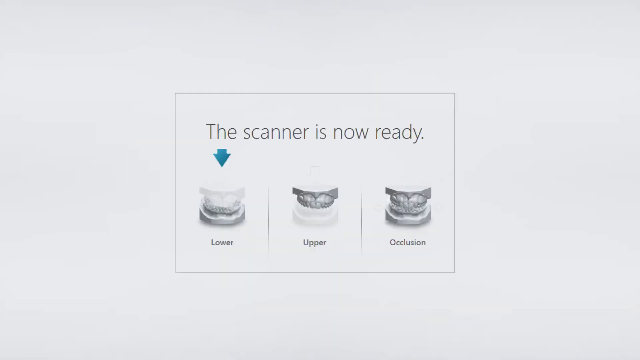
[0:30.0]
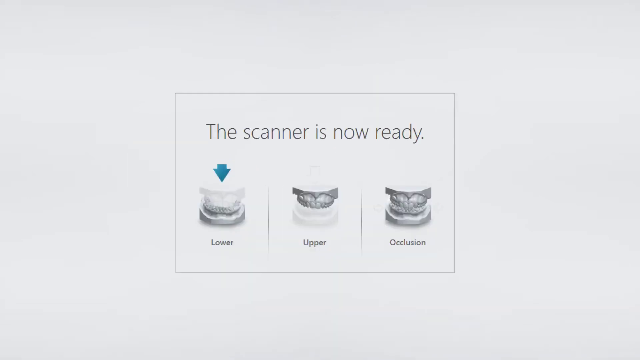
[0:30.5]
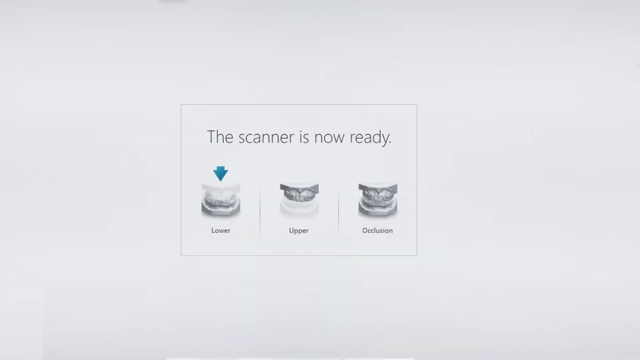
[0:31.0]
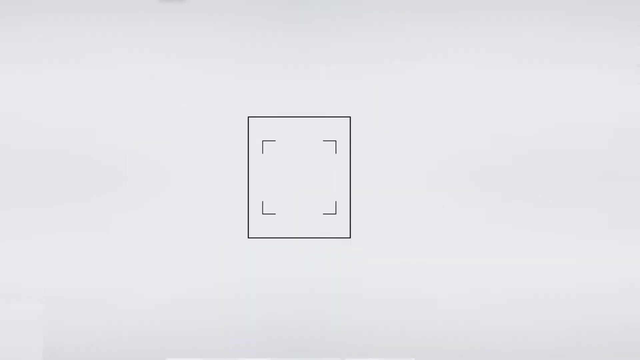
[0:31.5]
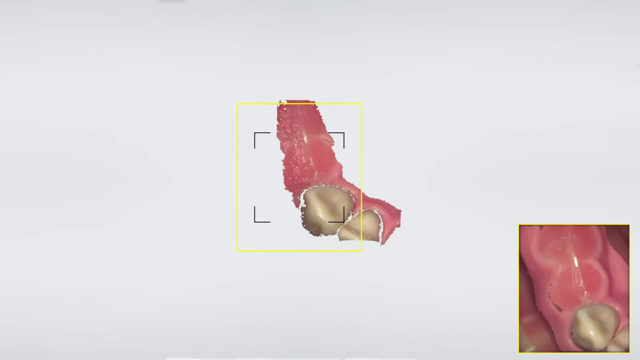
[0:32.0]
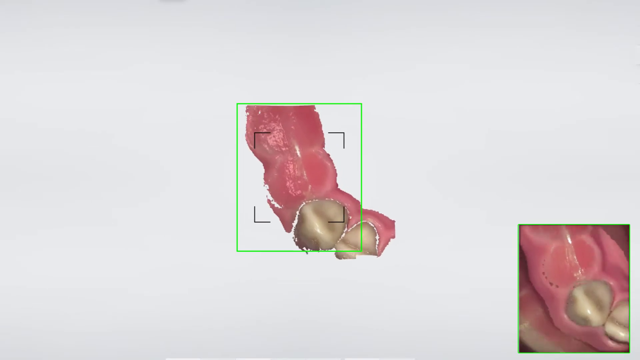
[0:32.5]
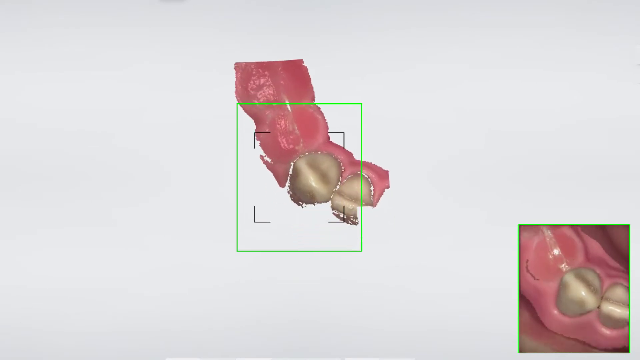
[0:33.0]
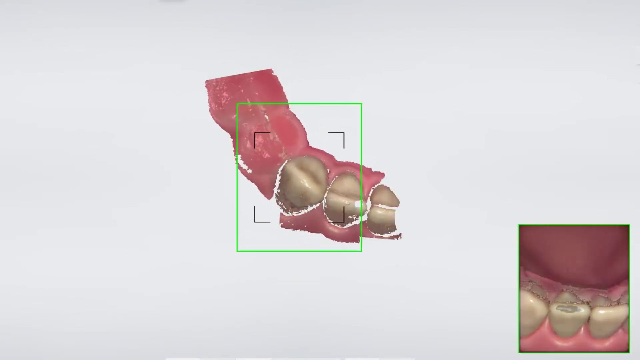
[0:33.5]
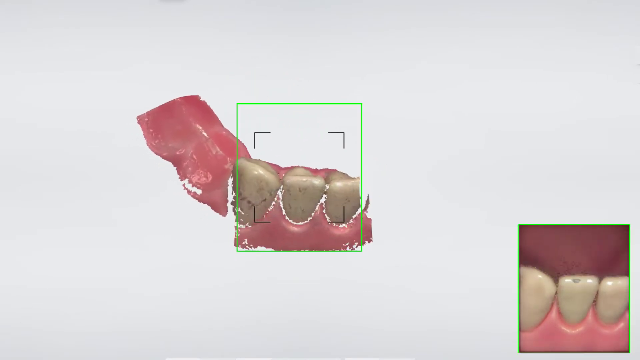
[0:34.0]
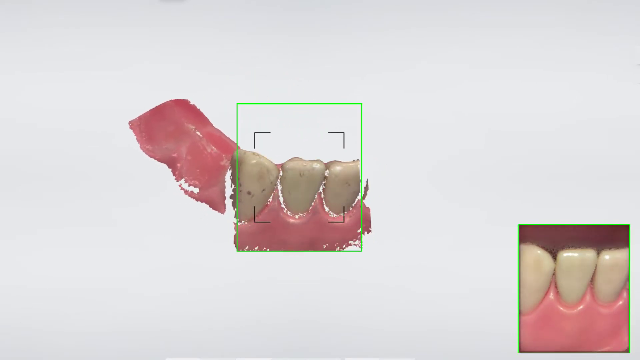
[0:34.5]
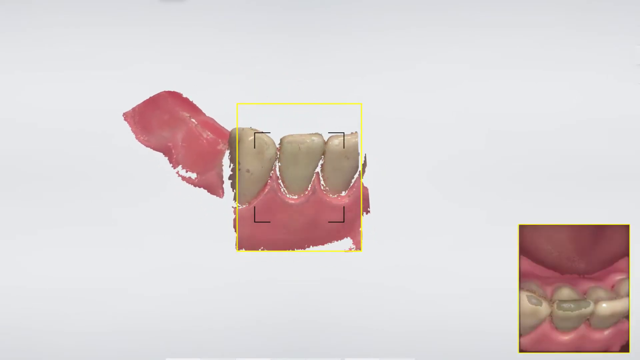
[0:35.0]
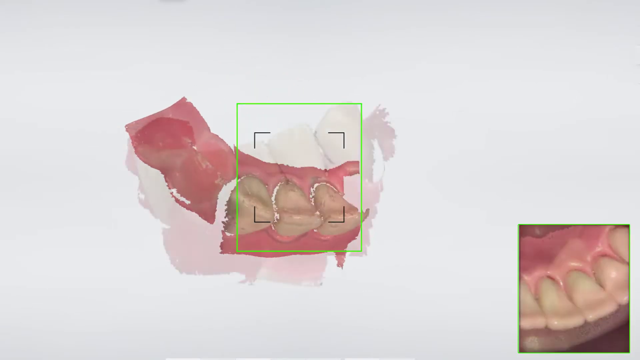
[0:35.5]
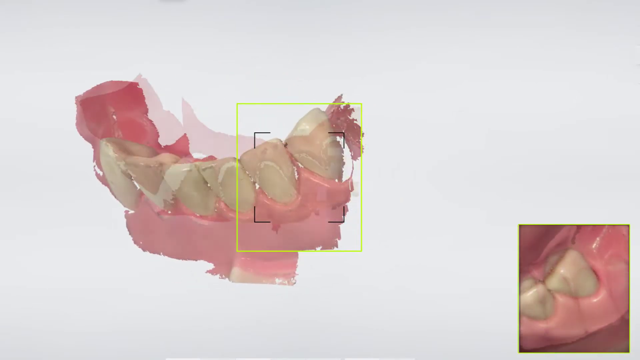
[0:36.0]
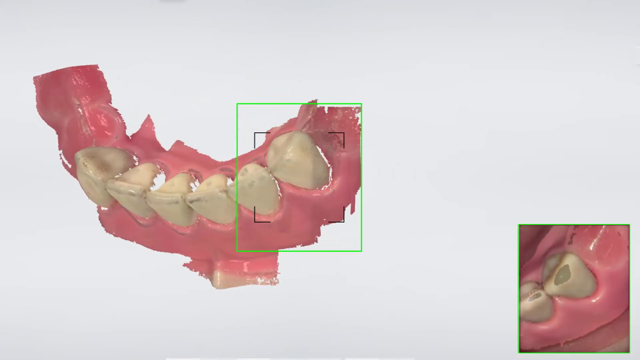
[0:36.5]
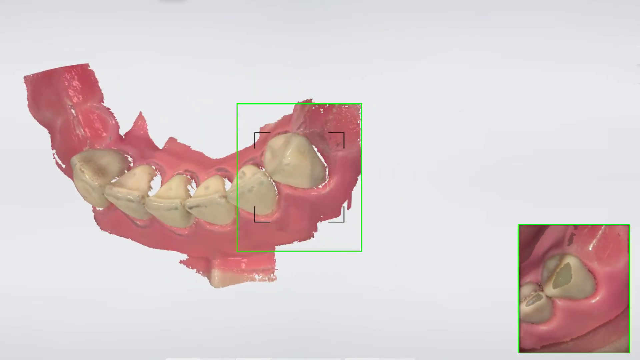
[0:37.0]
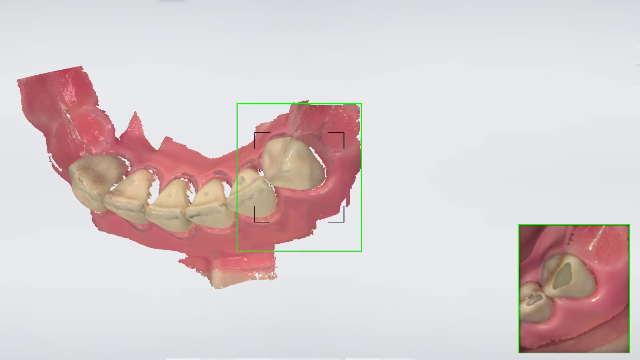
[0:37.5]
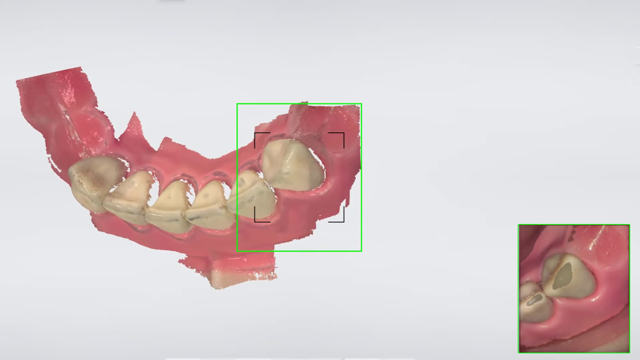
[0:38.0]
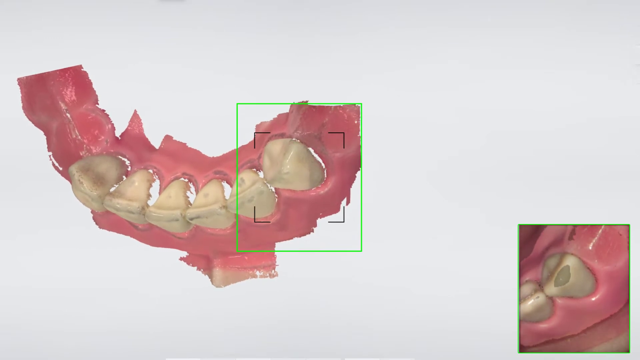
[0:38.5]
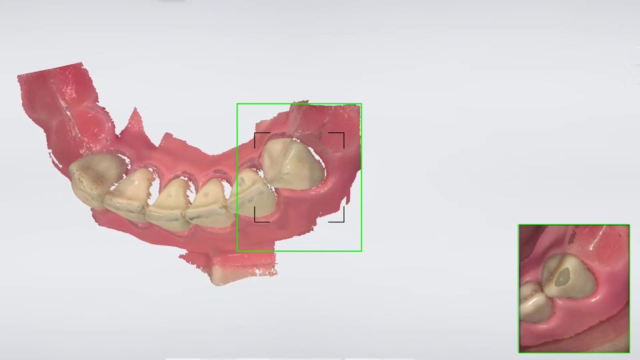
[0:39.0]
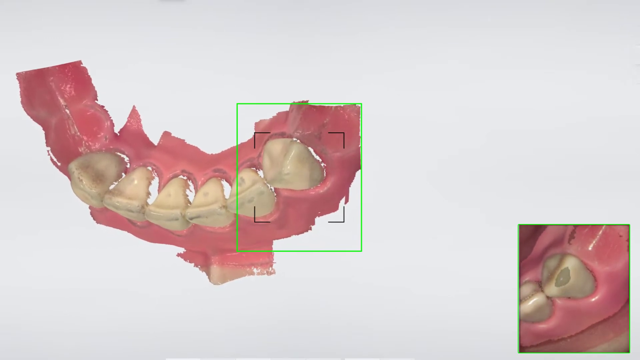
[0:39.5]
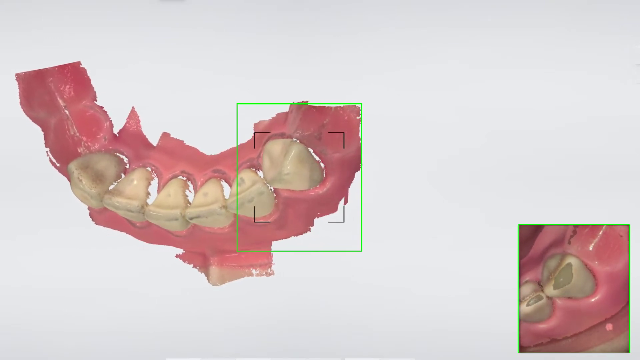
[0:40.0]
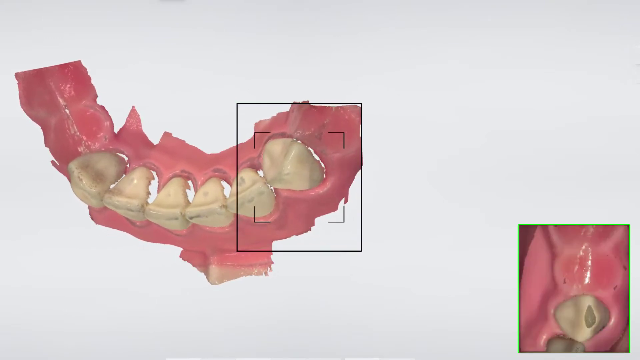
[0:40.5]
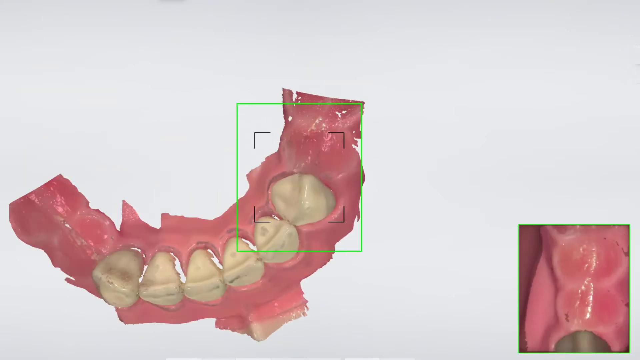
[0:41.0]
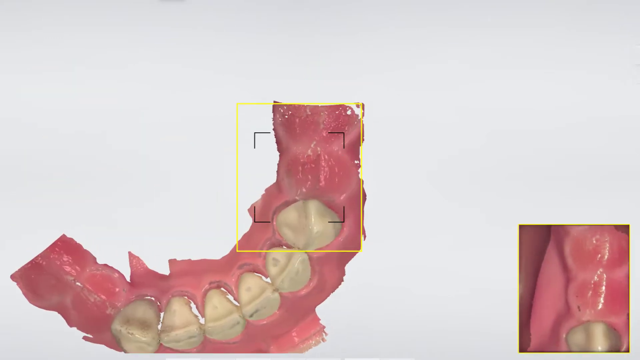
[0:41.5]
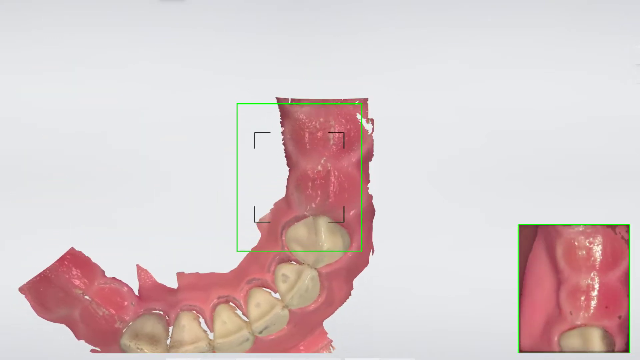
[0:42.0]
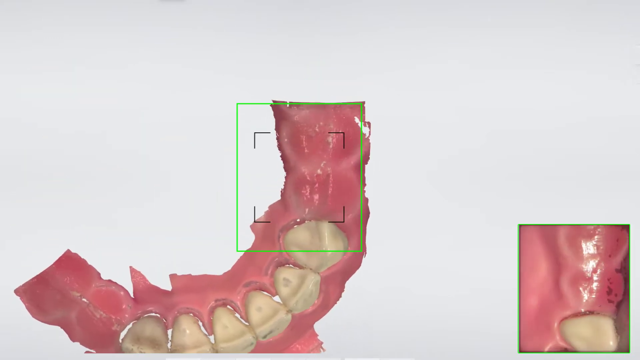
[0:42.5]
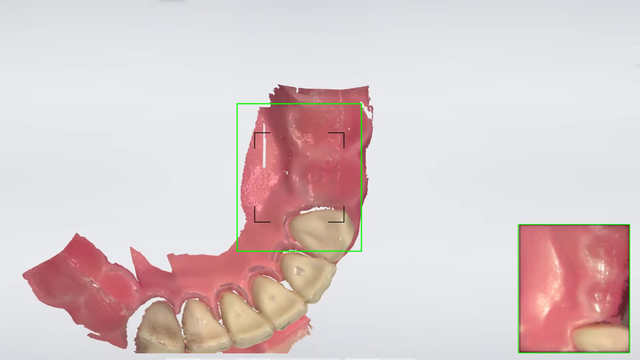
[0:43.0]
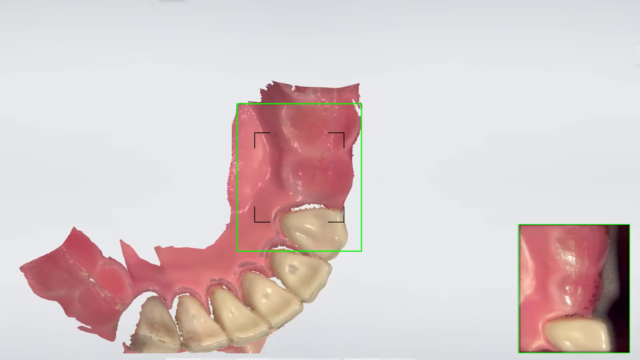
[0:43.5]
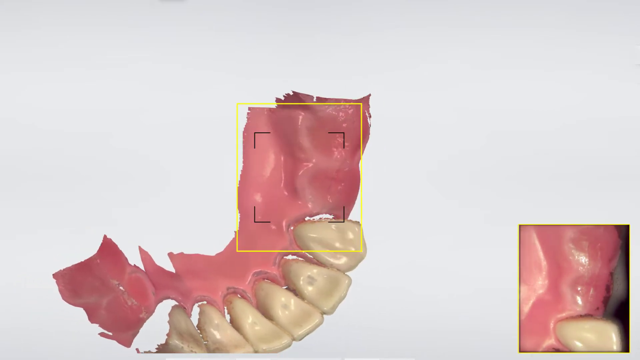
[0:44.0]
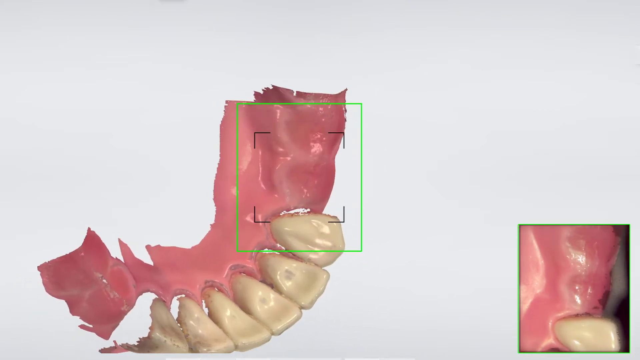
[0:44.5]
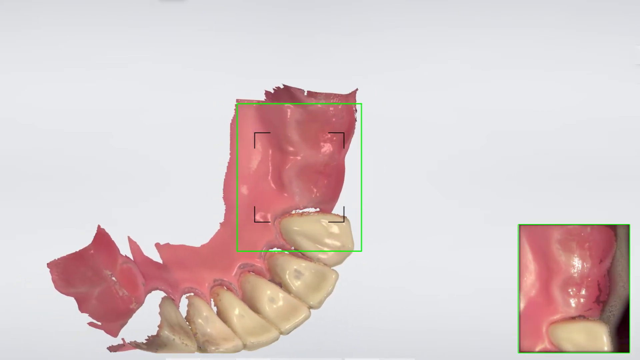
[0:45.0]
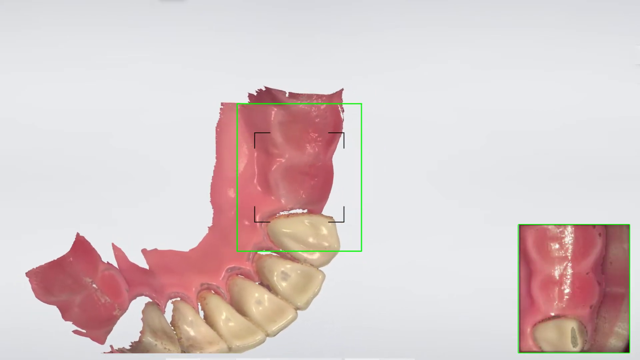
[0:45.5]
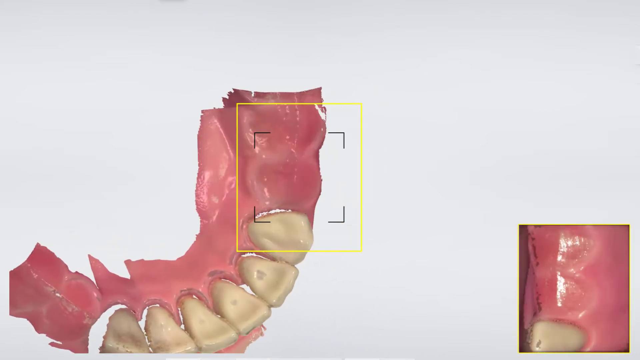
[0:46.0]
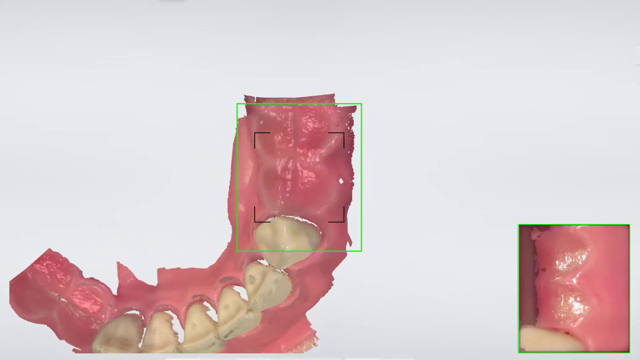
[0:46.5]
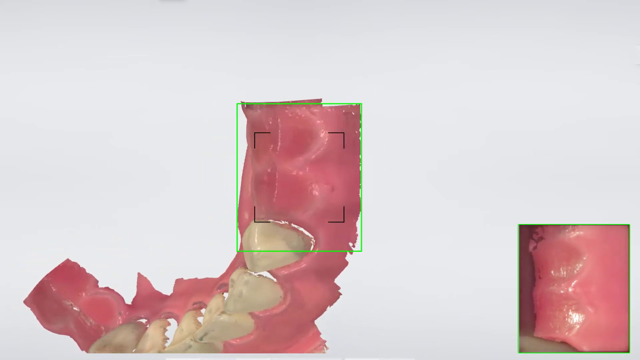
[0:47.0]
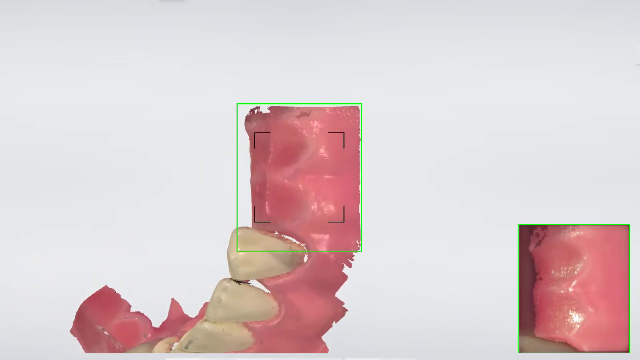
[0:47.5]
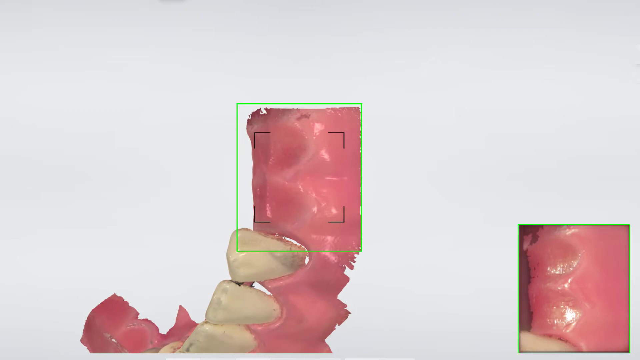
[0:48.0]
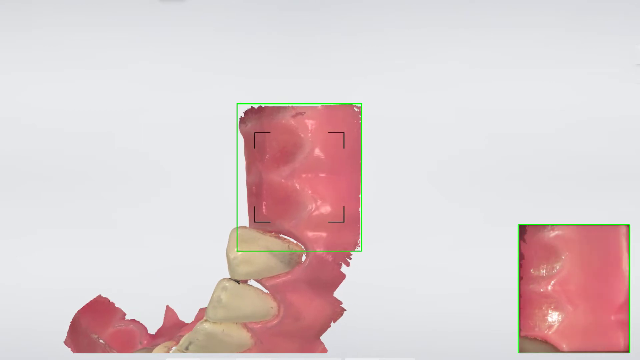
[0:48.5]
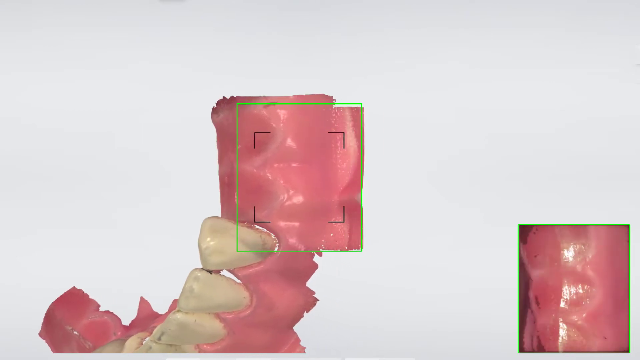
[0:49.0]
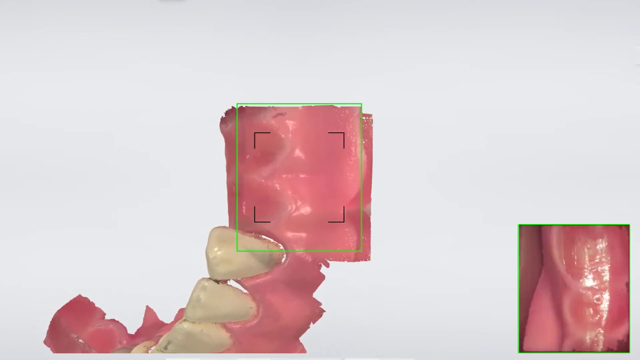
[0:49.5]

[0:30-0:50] The image of the gum and teeth disappears and is replaced by a small box in the centre of the screen with the text "the scanner is now ready". Below this text are three images: the lower gums on the left, the upper gums in the centre, and the occlusion, both gums together, on the right. A blue arrow hovers above the image of the lower gums, and this image bounces. The view switches to a live camera feed of a tooth in the gums. In the centre is the image of the teeth built up earlier, with teeth in the centre and gum on the edge, along with a green square and some focus corners in the middle. In the far right corner is a camera image of the same teeth and gums. The camera image moves across the teeth and gums, starting from the left behind the teeth and slowly moving across so the top of each tooth is visible, then the gums. The square changes to yellow, then back to green when this image is complete. The back of the teeth is shown, and then the view moves to the front of the gums and the front of the teeth.